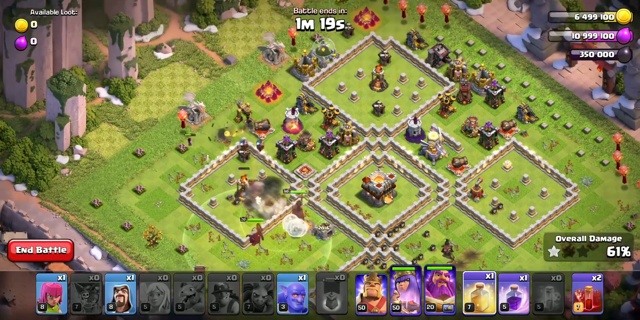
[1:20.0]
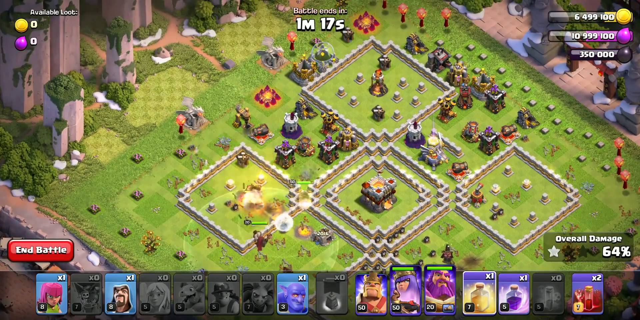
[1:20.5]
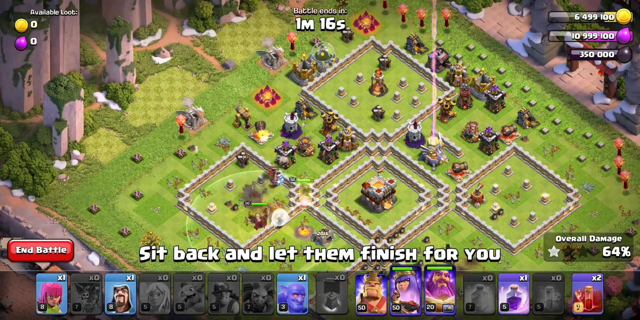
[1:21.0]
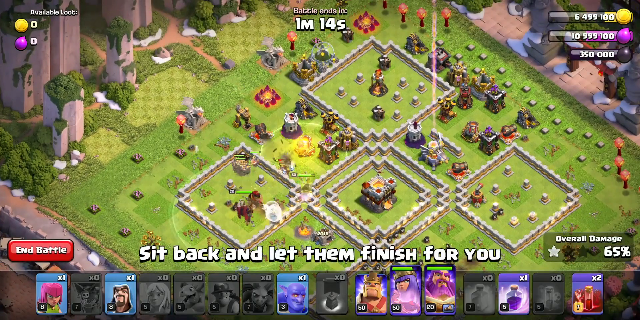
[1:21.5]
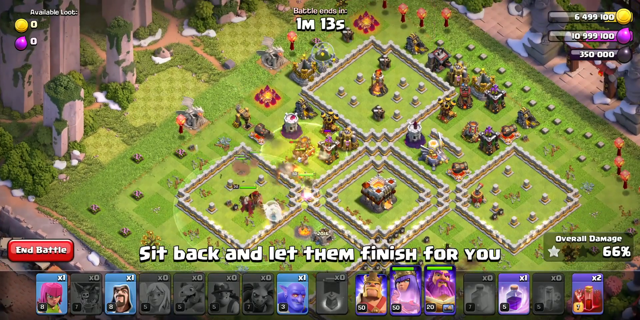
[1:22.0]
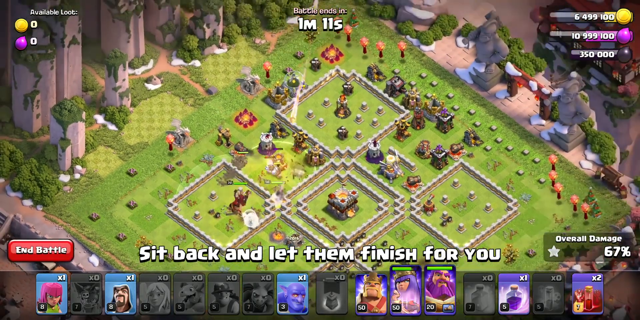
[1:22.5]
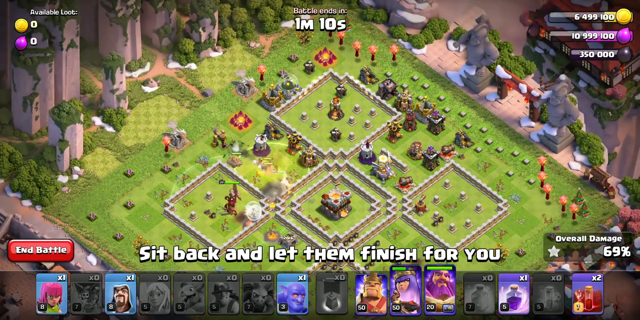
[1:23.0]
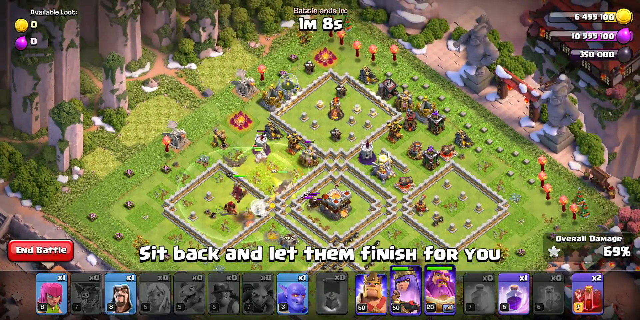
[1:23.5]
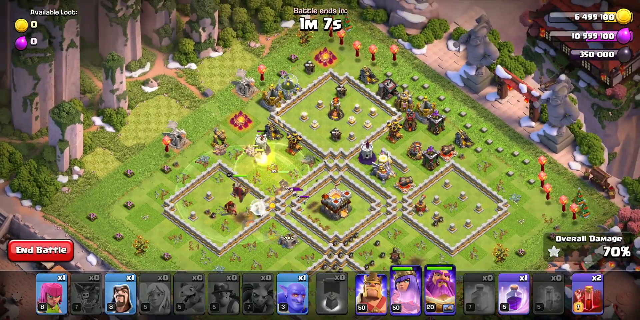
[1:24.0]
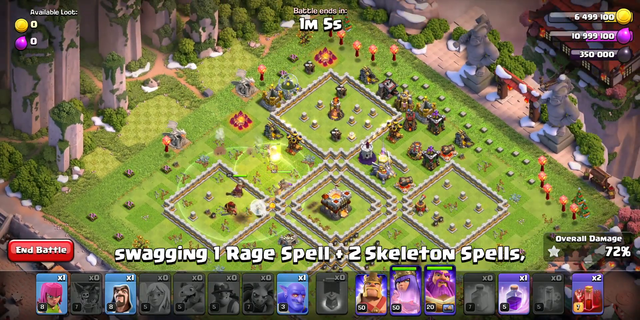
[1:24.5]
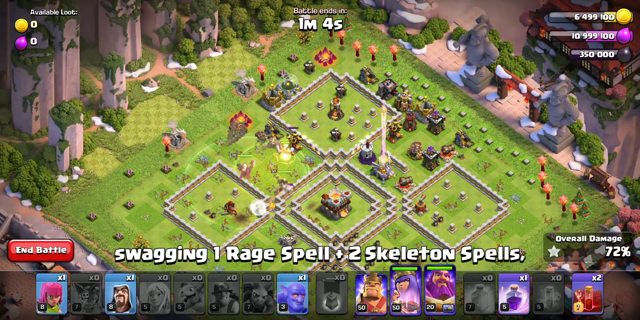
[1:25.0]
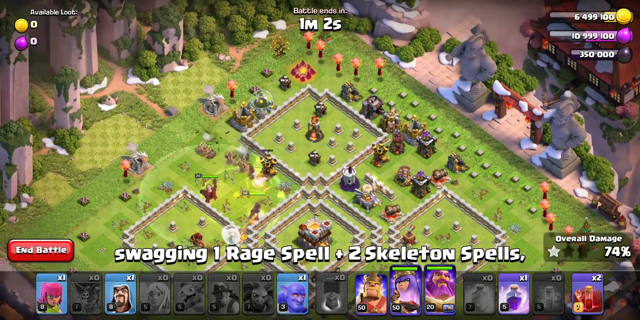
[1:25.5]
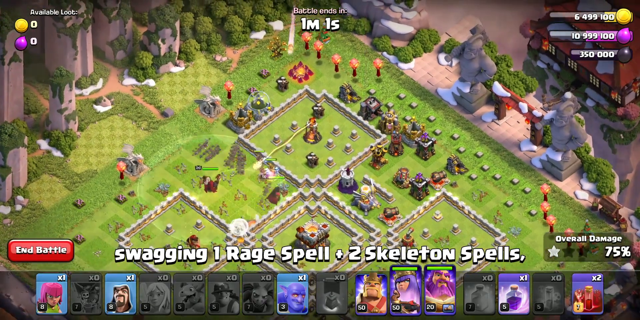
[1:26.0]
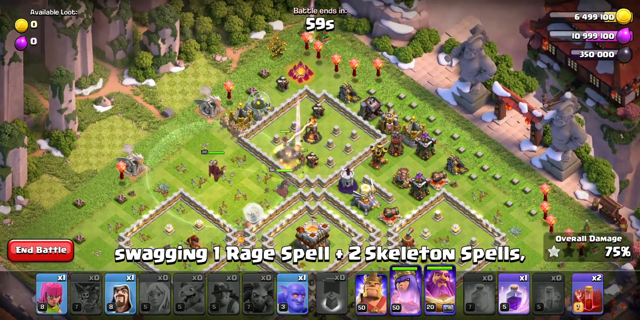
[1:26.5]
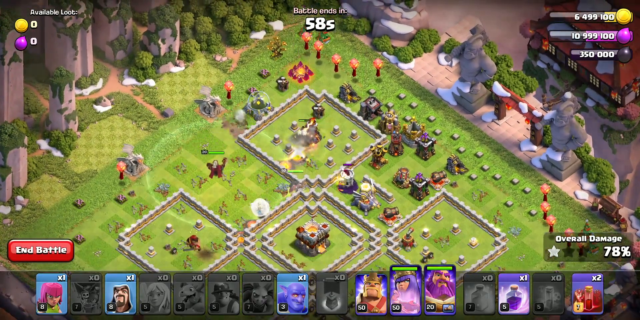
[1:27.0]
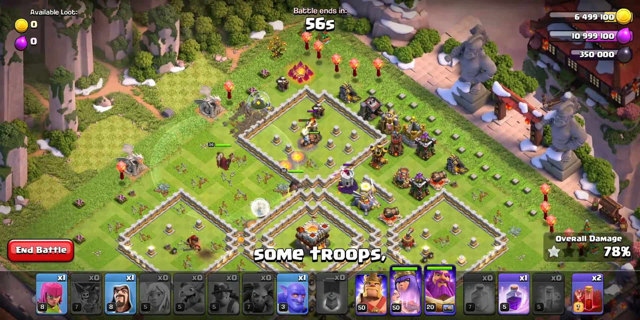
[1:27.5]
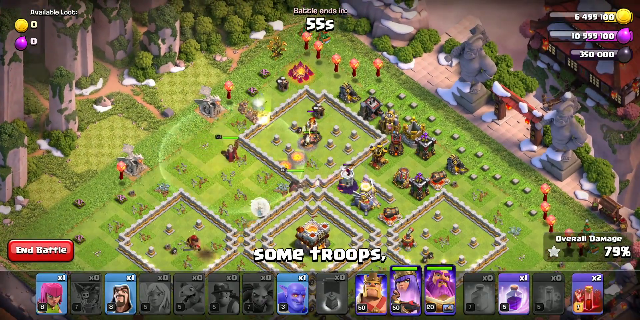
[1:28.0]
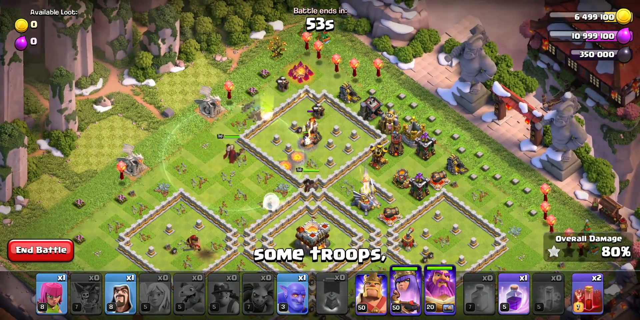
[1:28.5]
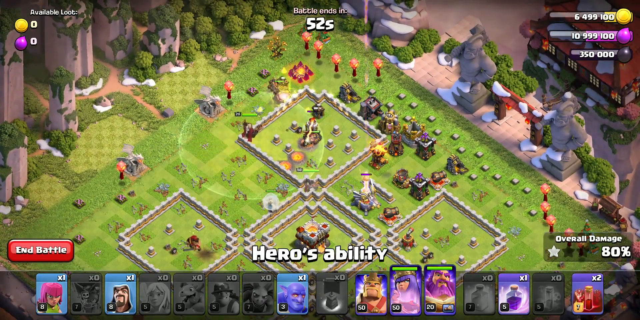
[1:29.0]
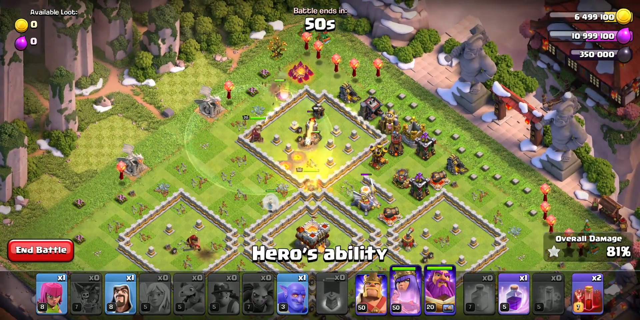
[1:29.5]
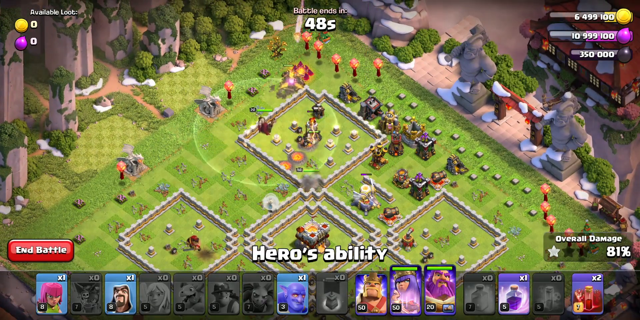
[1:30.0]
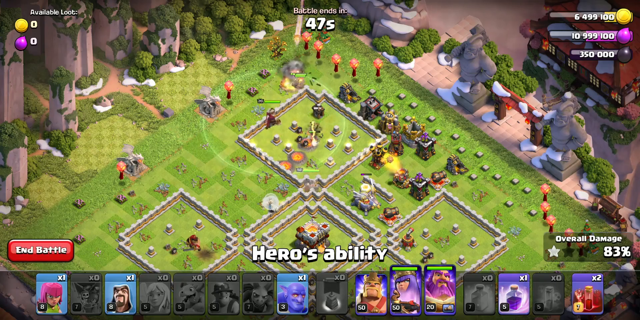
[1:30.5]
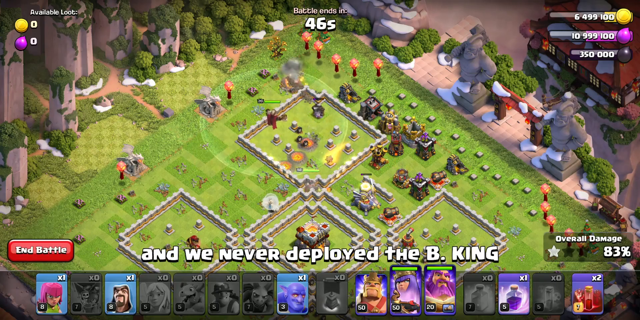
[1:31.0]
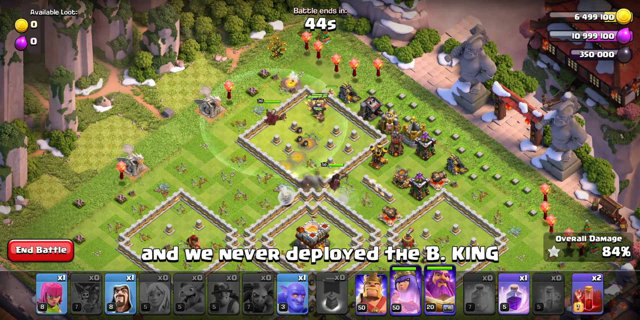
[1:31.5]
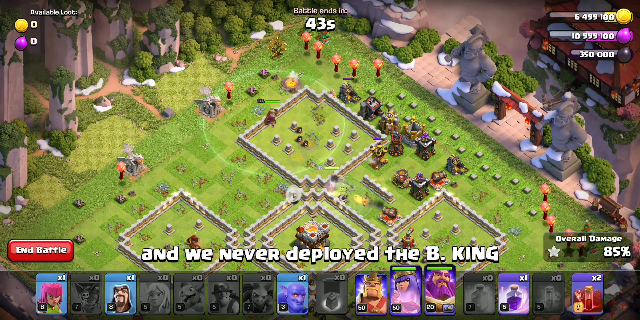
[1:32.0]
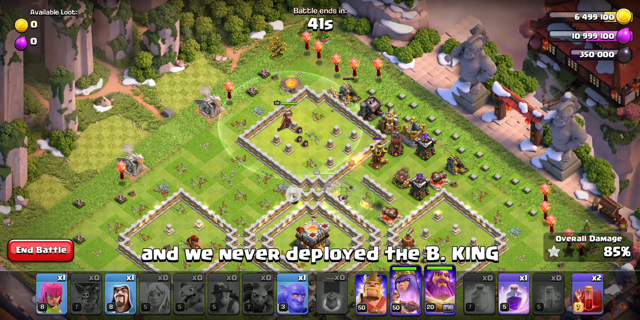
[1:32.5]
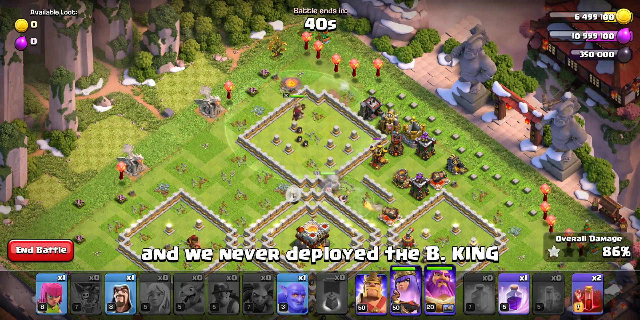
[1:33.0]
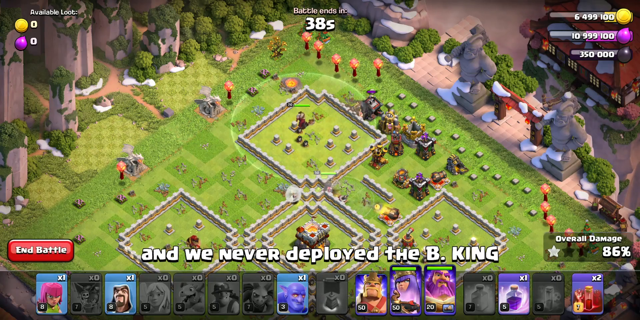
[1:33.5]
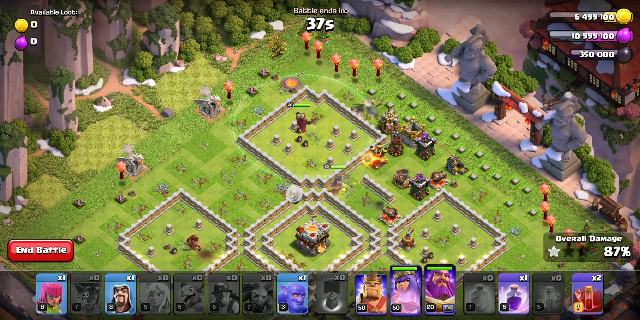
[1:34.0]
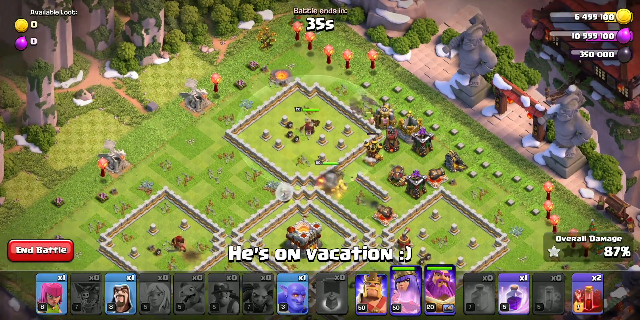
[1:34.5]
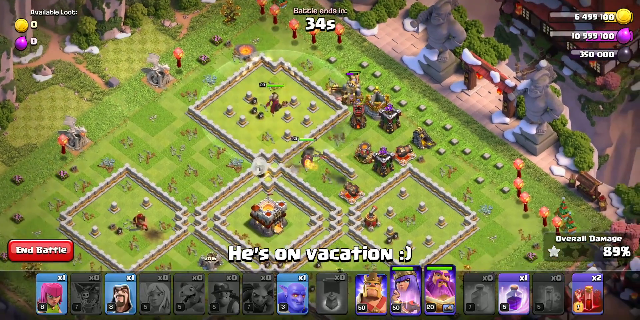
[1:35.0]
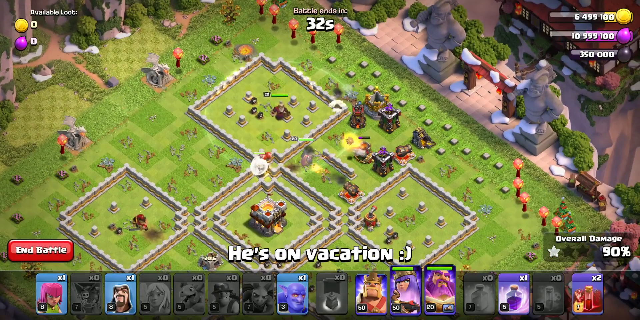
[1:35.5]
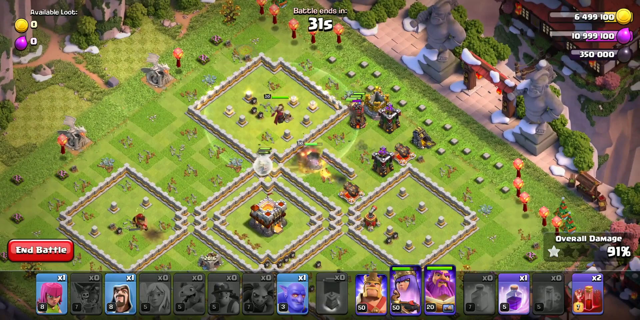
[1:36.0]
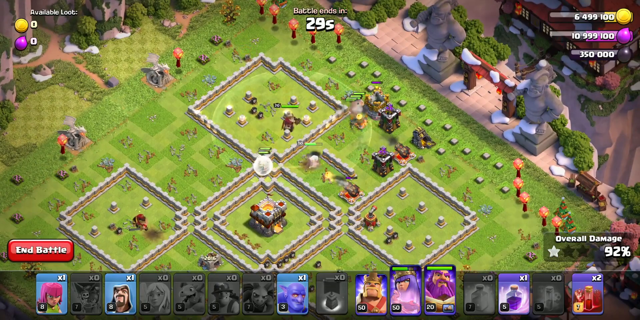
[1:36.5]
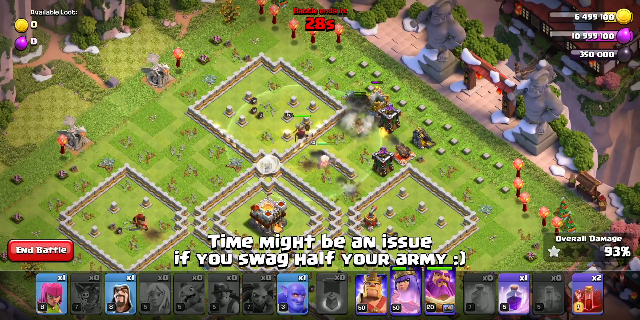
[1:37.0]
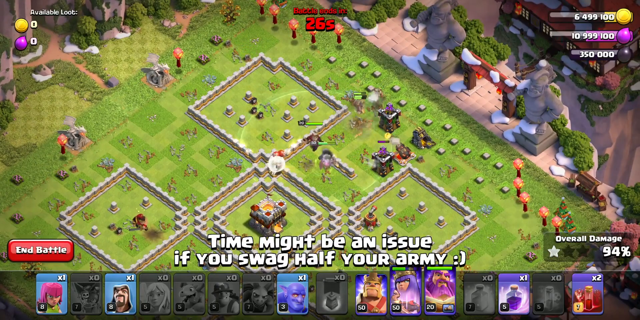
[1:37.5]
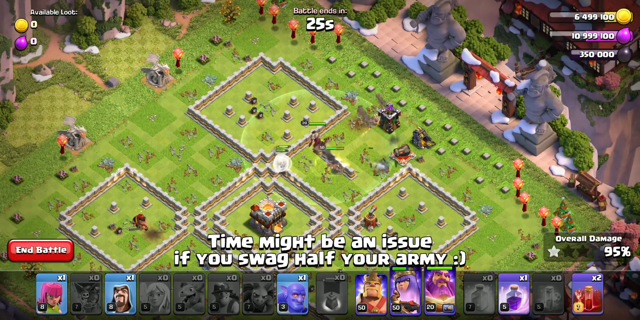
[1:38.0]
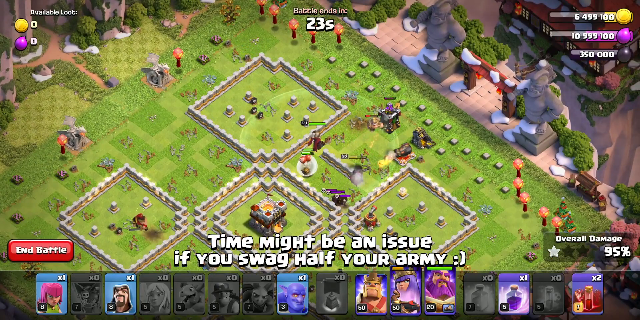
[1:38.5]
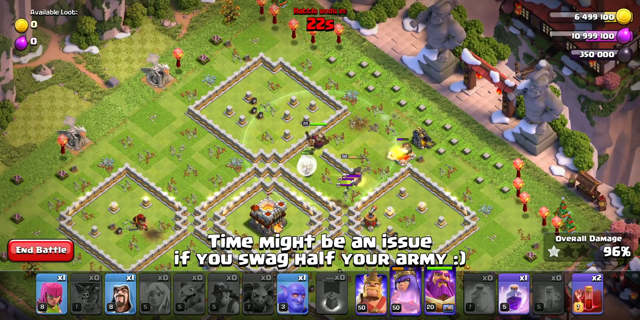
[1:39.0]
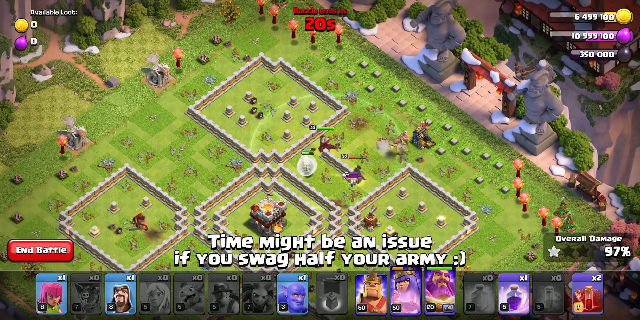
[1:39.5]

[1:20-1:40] As more towers fall, white text reads "sit back and let them finish for you." A minute remains as several units work. White text reads "swagging one rage spell + two skeleton spells." With less than a minute left, white text at the bottom shows "some troops" and "heroes ability." Another layer of white text states "and we never deployed the B King. He's on vacation" followed by a smiley face, and "They might be an issue if you swag half your army" with a smiley face. The timer keeps ticking down. The stage stays the same while the battlefield loses units and defensive units such as archers, bombers and castles. Several cannons are destroyed, defensive items such as archers or wizards are destroyed, and fire camps are diminished.